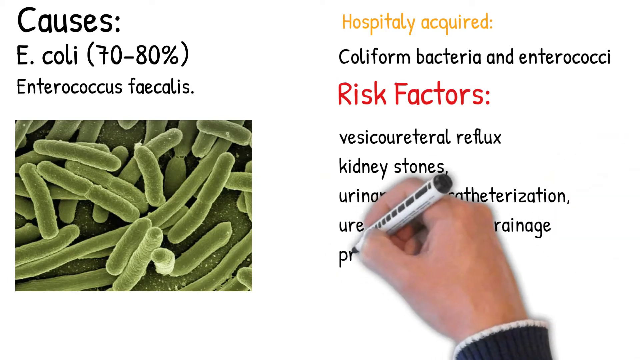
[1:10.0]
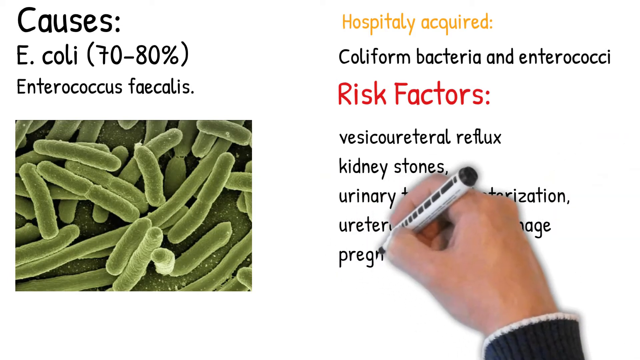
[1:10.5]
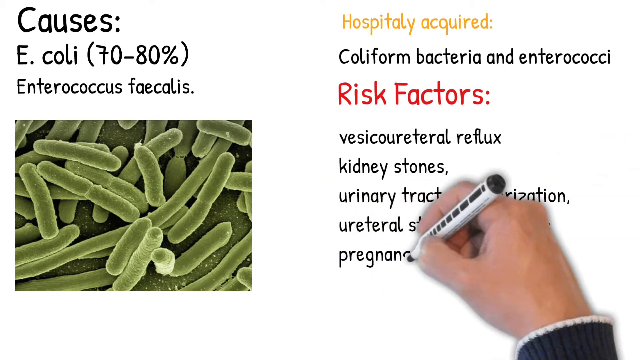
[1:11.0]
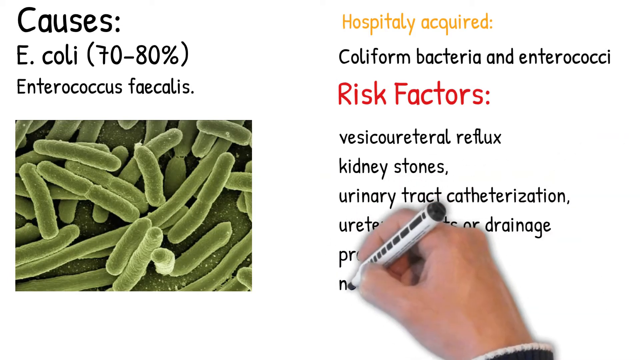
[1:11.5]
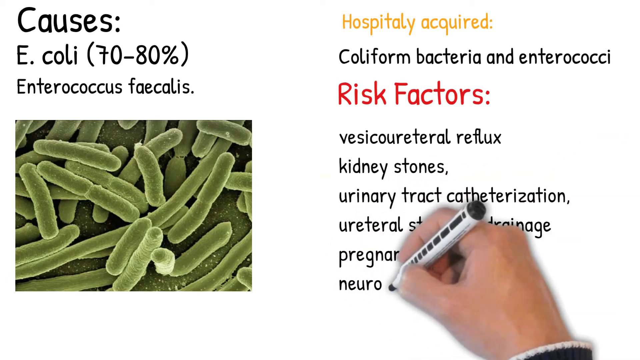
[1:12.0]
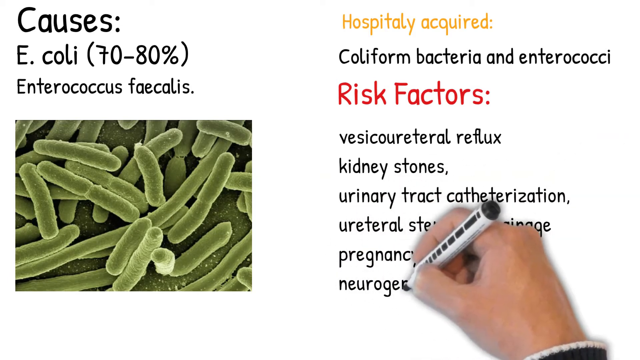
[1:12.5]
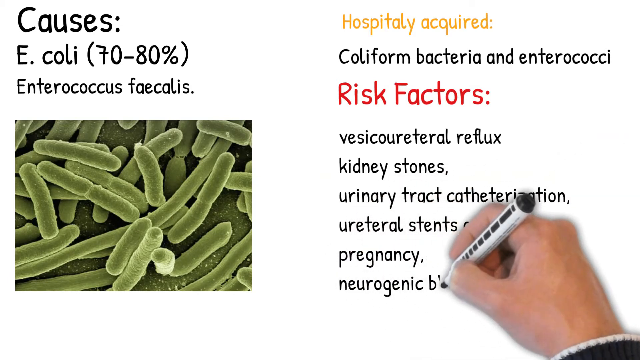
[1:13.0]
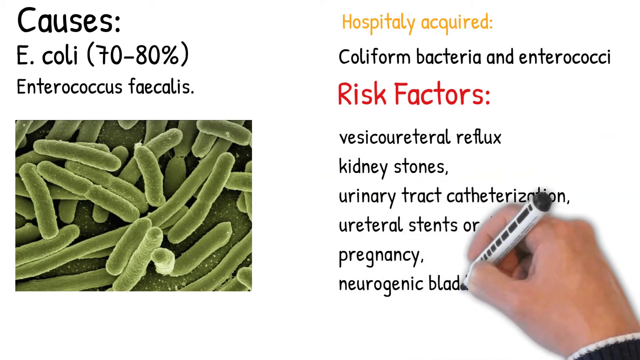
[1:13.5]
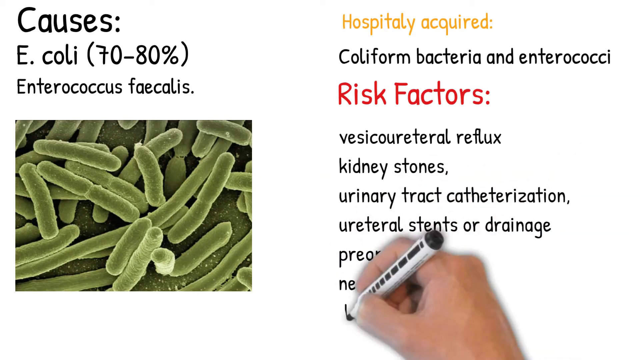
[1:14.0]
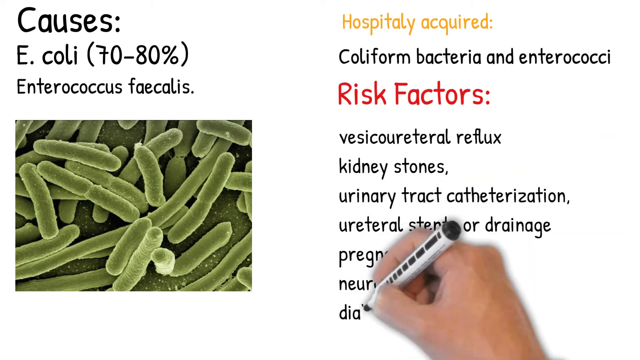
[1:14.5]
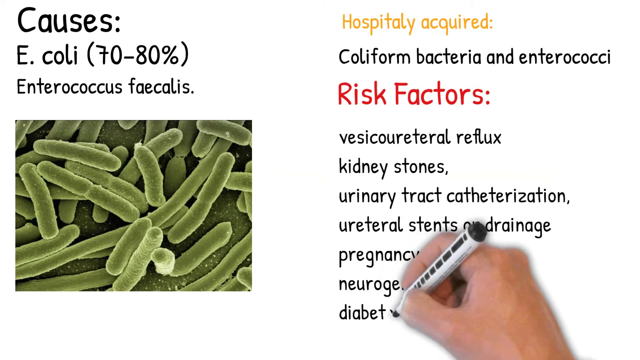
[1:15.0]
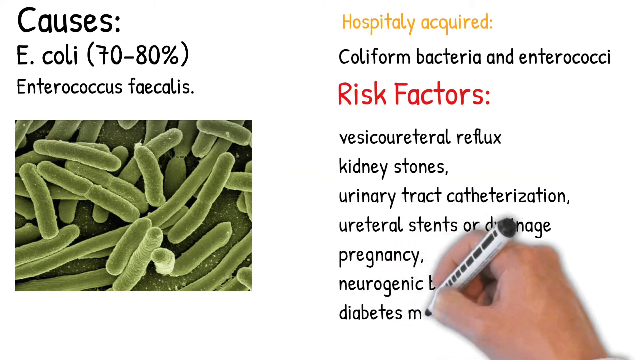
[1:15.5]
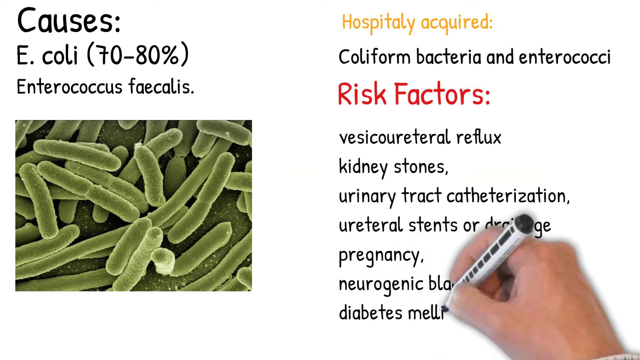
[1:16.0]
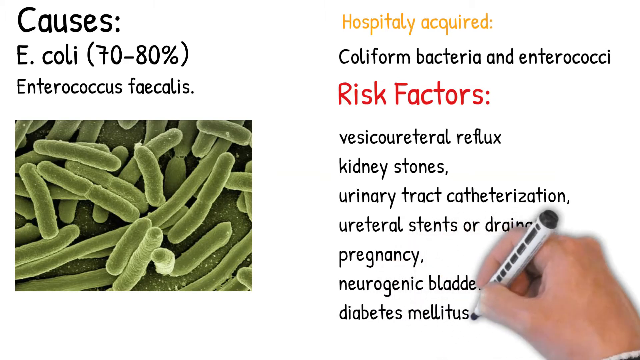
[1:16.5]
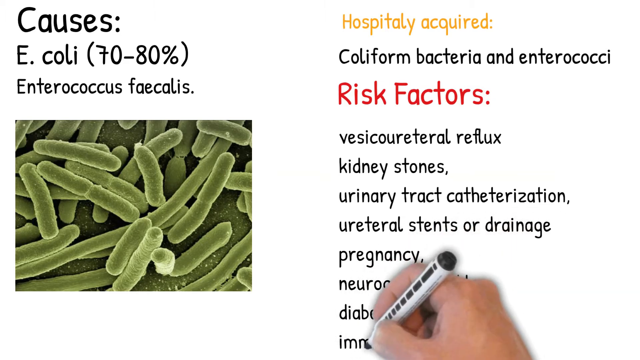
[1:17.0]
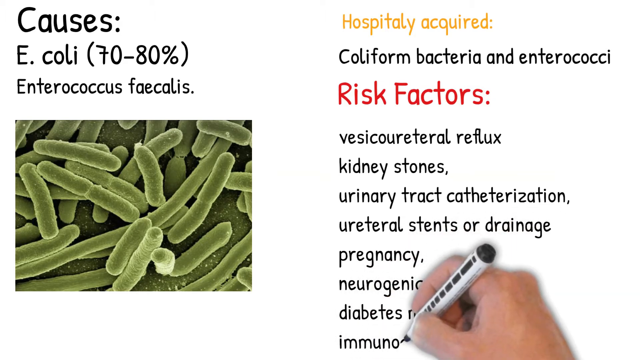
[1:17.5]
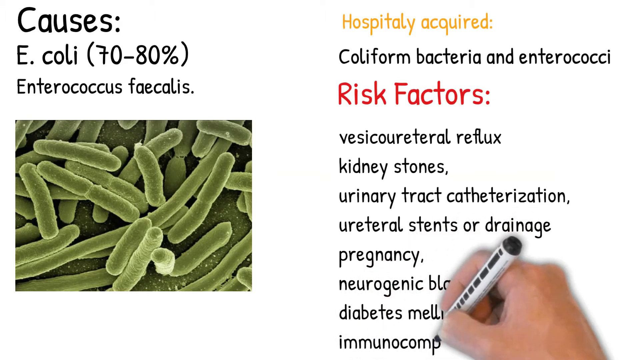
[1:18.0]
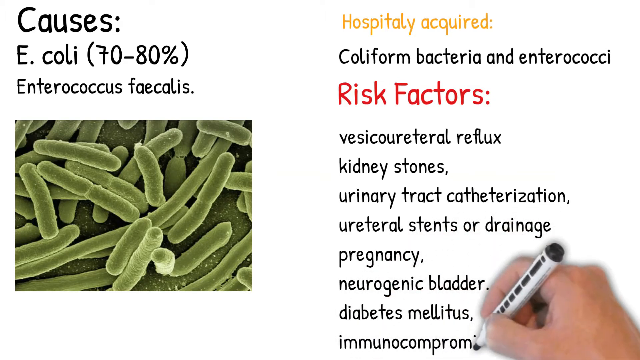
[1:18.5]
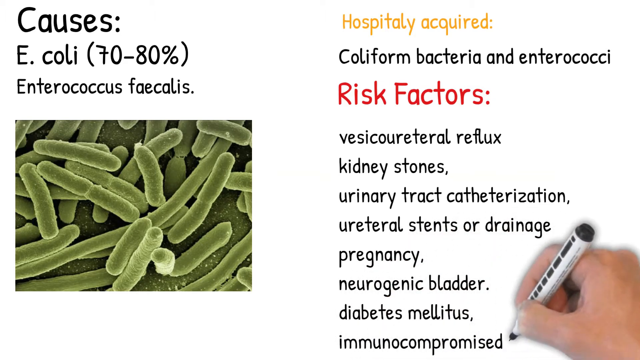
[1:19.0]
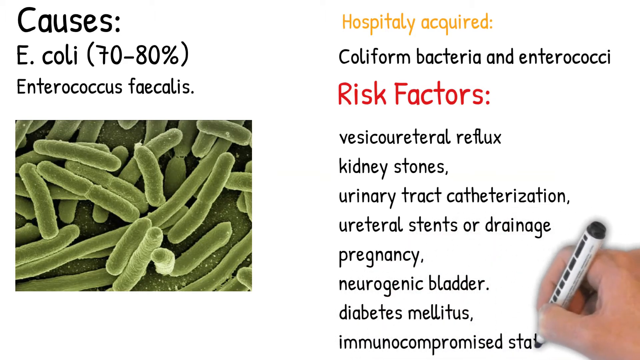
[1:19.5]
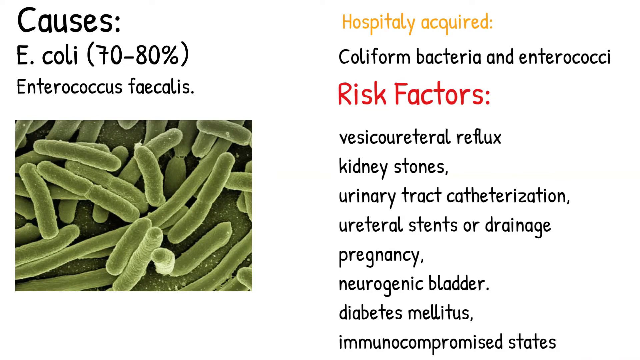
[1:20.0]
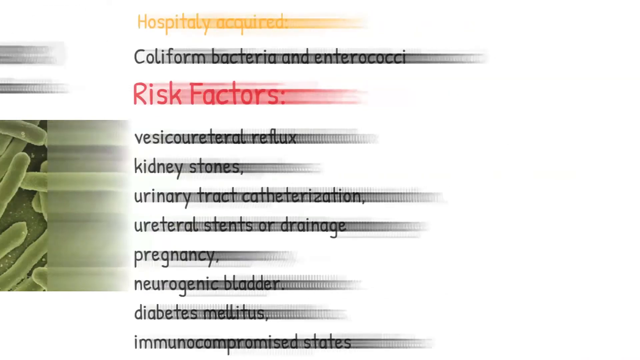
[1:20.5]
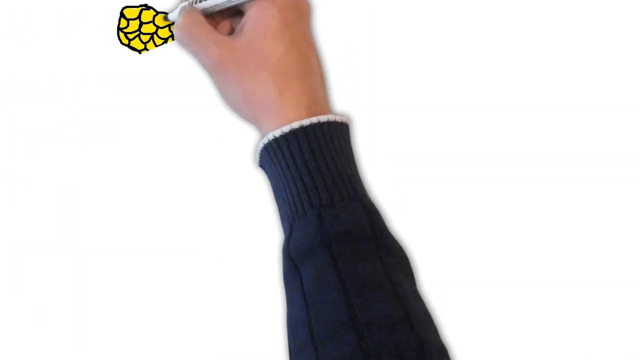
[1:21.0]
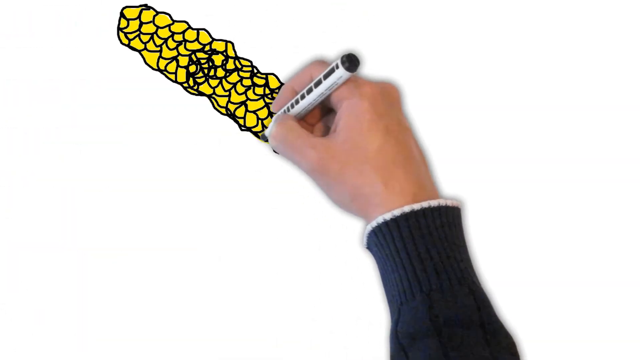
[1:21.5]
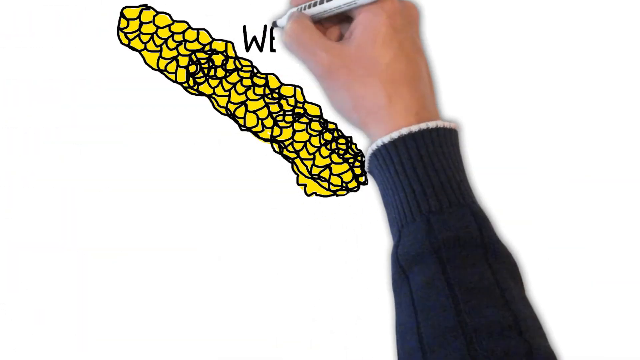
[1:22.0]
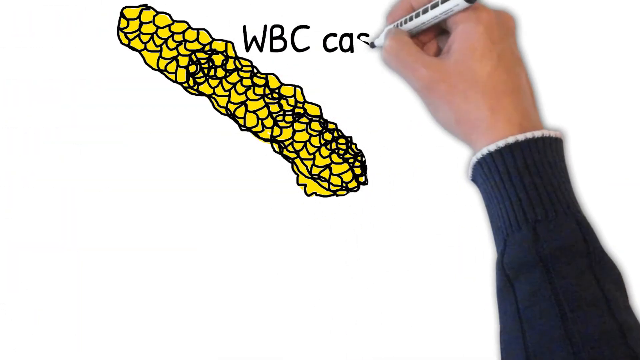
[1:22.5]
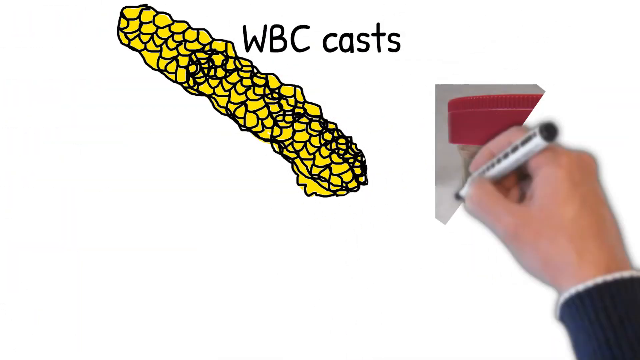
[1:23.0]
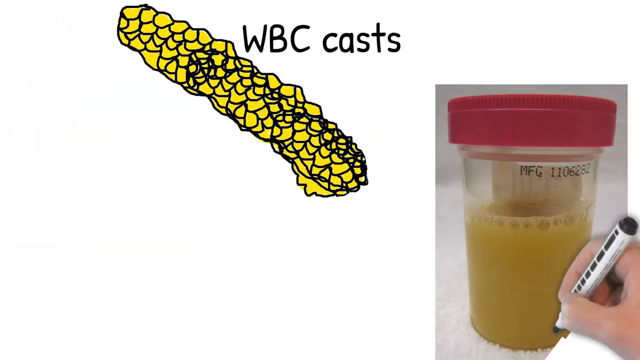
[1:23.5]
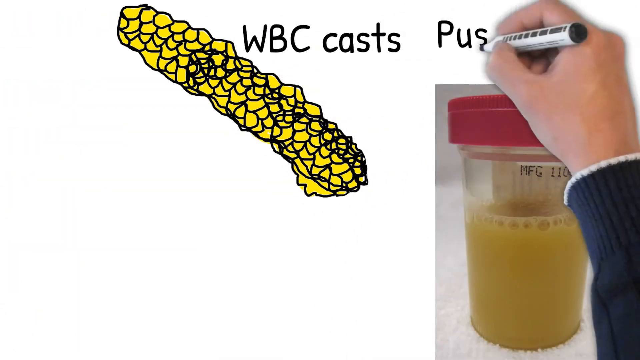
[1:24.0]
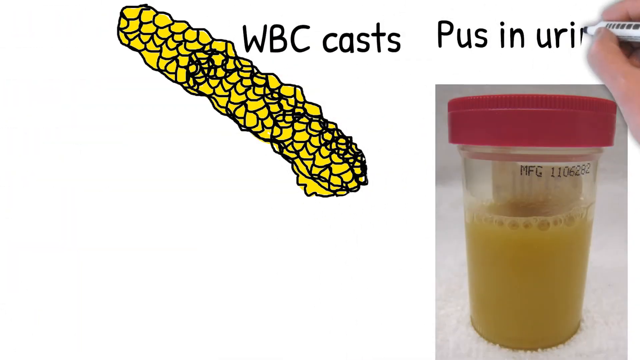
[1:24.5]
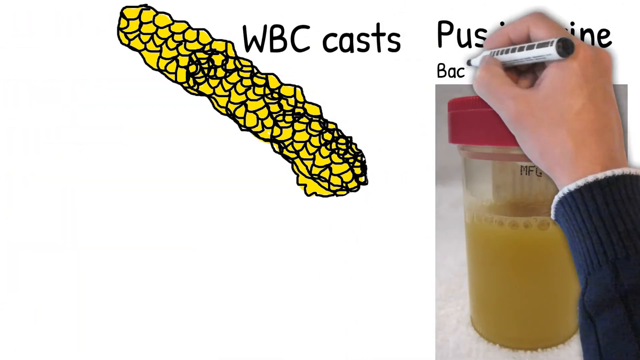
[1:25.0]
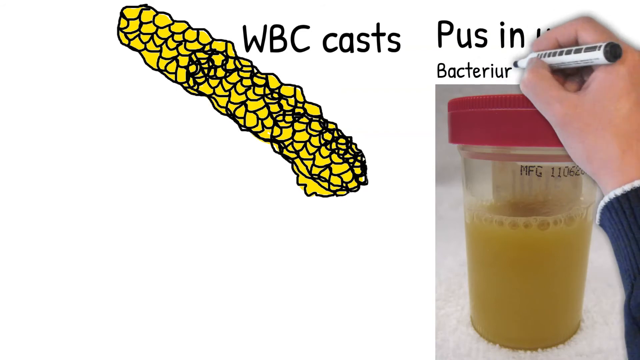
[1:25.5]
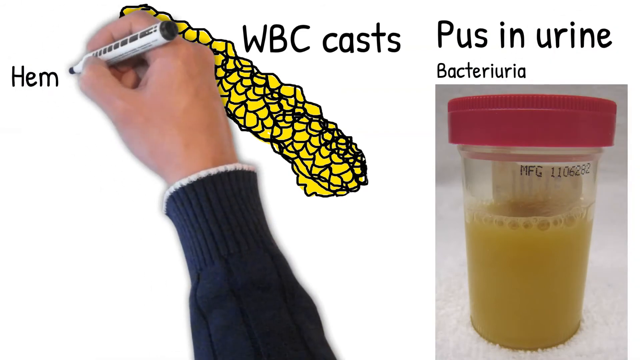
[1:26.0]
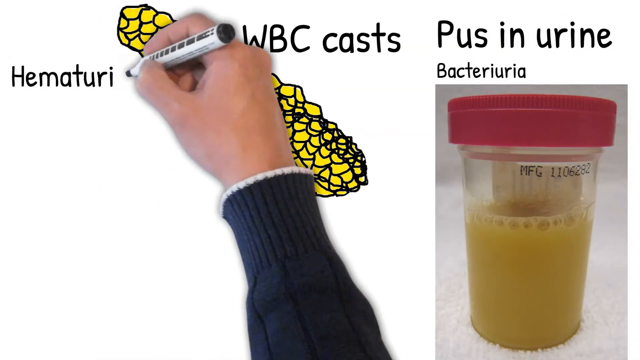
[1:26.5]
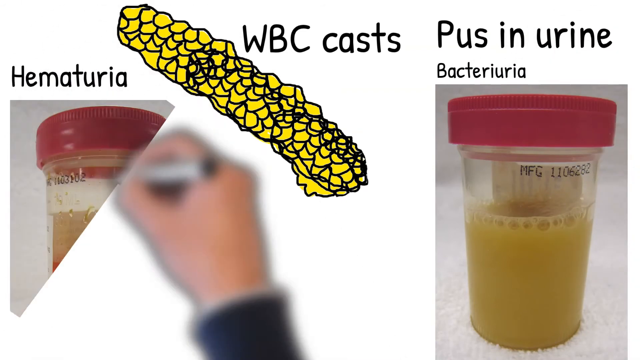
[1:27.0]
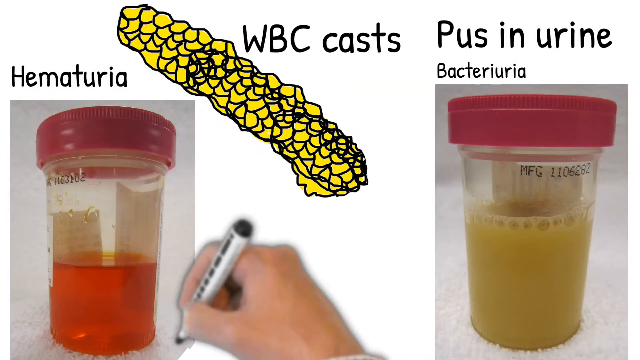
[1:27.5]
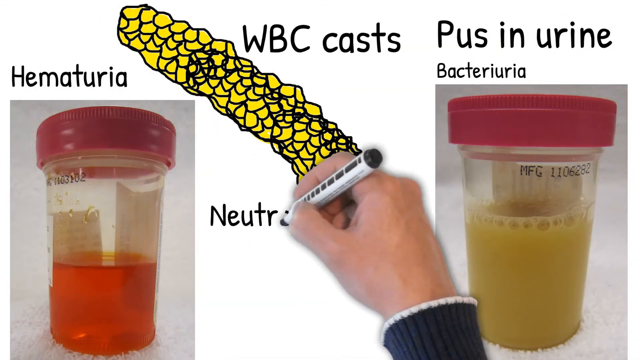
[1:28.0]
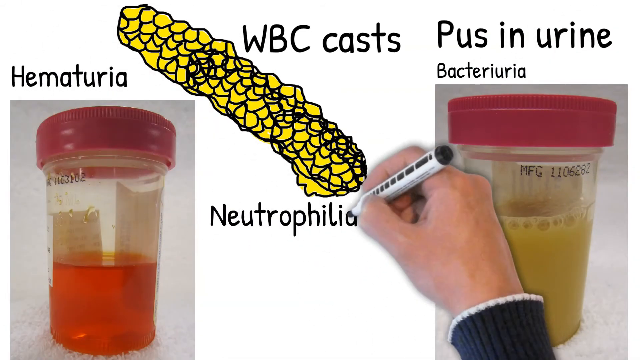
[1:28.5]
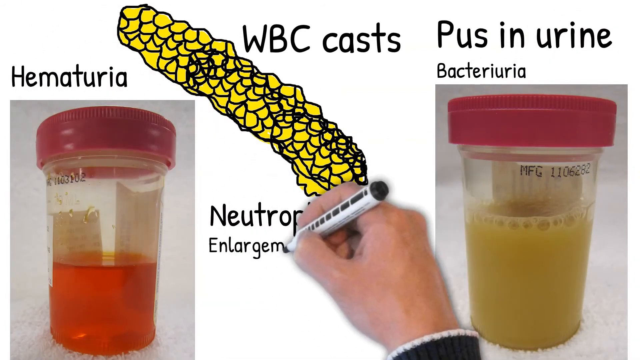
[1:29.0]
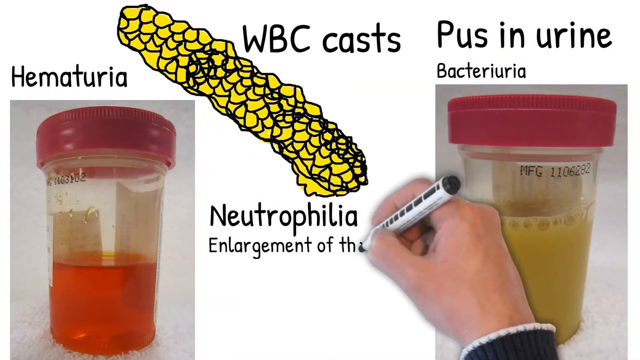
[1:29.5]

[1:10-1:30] The man's hand writes on a whiteboard with a white pen with black on its side. There is a picture of E. coli on the board. In black it says "causes: E. coli, 70 to 80 percent" and "enterococcus"; in yellow it says "hospitality acquired", with "coliform bacteria and enterococci" underneath in black. "Risk factors:" is in red, followed in black by "vesicular reflux, kidney stones, urinary catheterization, urethral stents or drainage, pregnancy, neurogenic bladder, diabetes mellitus, immune compromise". The view then switches to a picture that looks like a urine sample with "hematuria" above it, a yellow mass labeled "WBC casts", and another urine sample showing pus in the urine, labeled "bacteria". He also writes "neutrophilia" and "enlargement of the kidney".